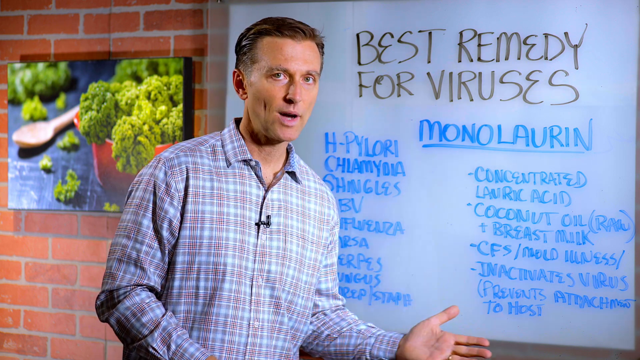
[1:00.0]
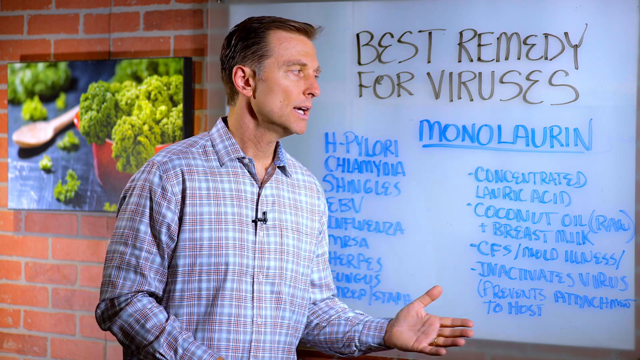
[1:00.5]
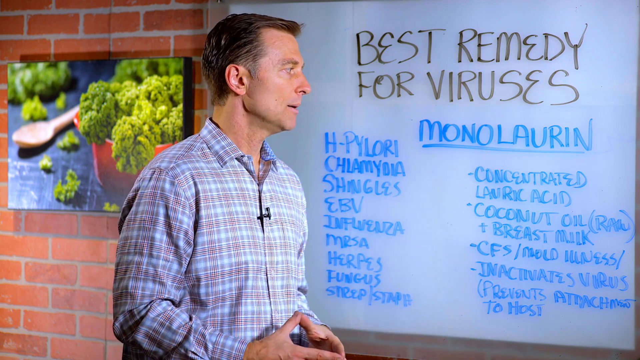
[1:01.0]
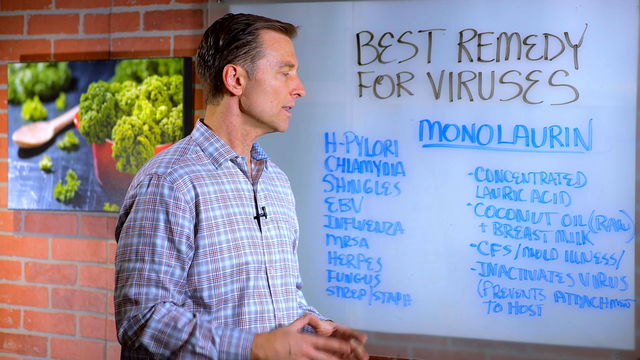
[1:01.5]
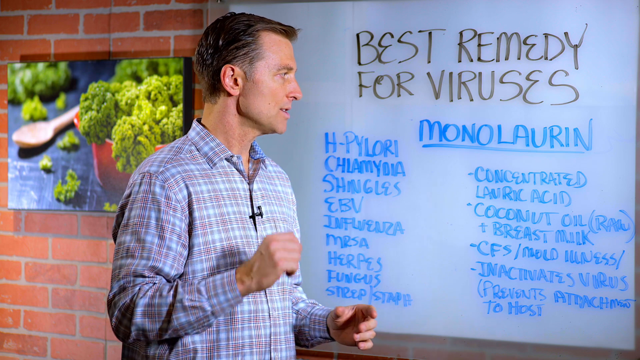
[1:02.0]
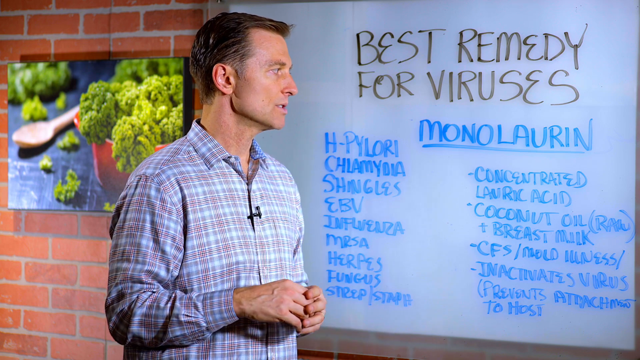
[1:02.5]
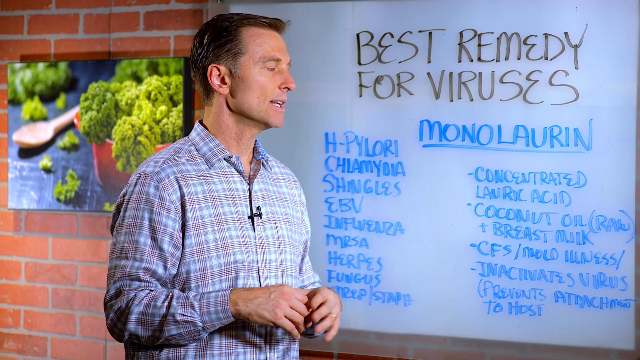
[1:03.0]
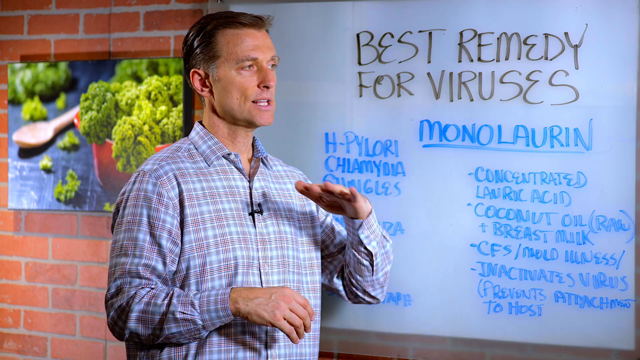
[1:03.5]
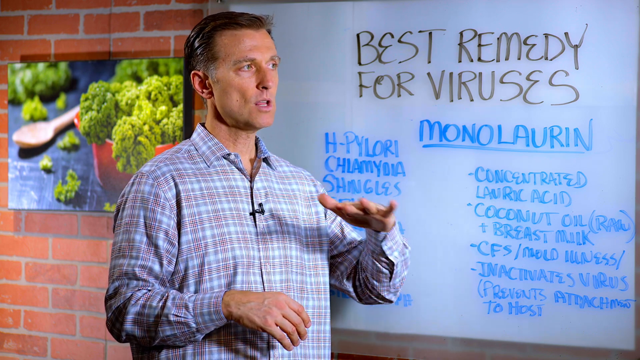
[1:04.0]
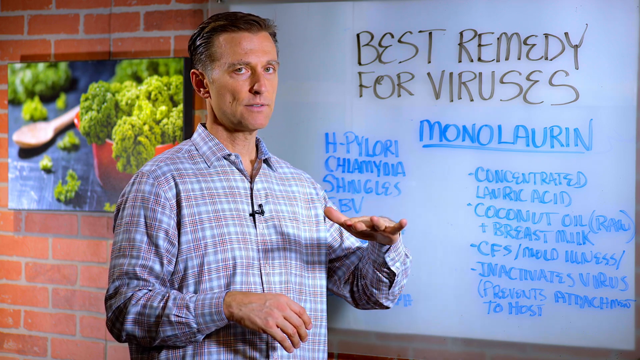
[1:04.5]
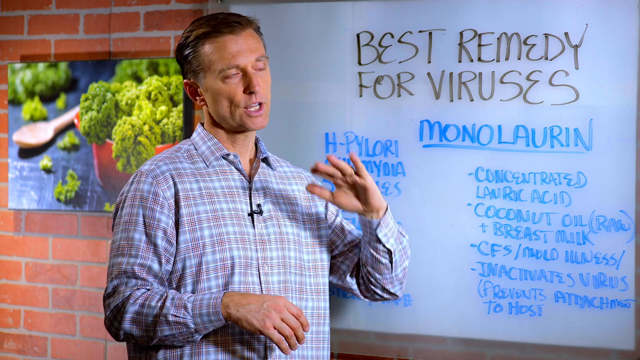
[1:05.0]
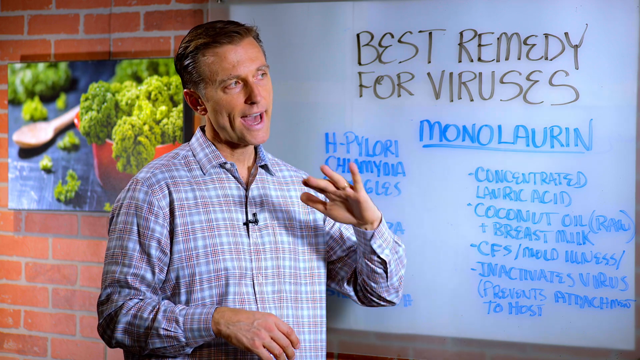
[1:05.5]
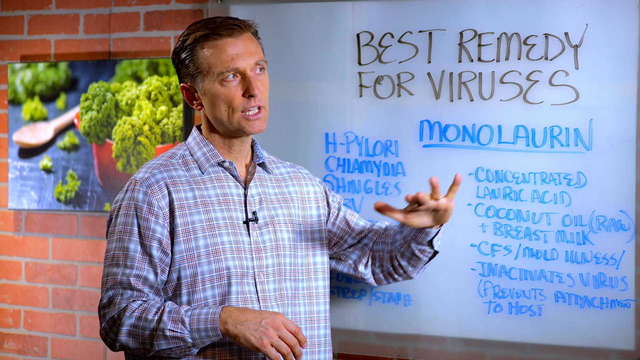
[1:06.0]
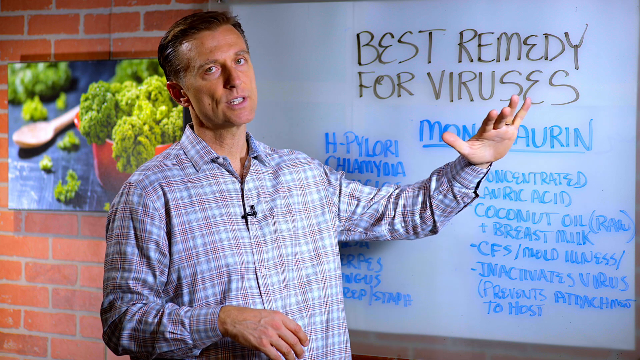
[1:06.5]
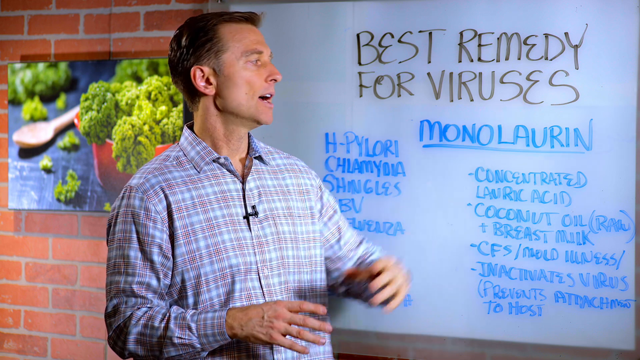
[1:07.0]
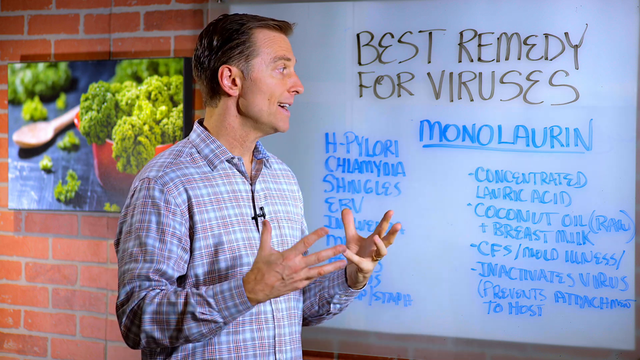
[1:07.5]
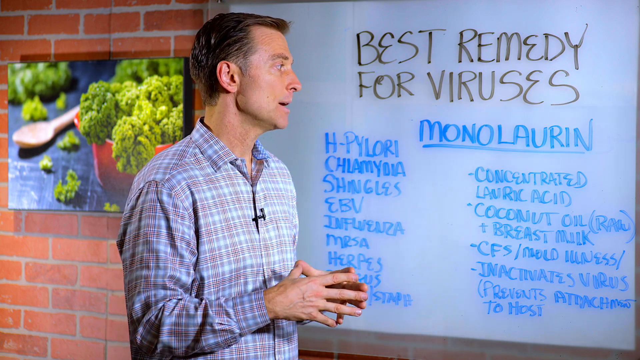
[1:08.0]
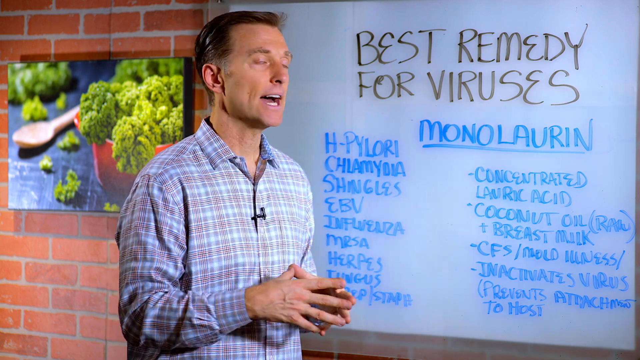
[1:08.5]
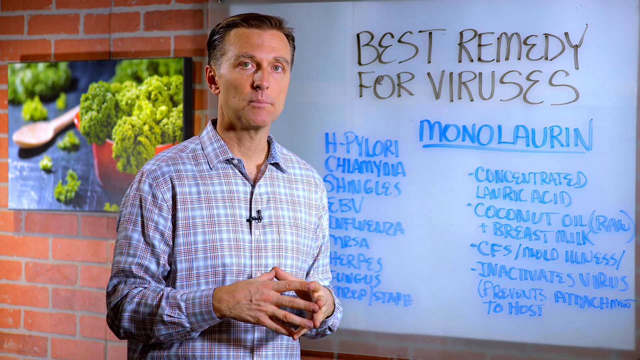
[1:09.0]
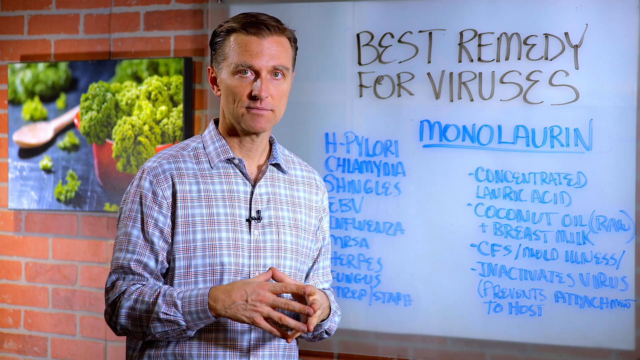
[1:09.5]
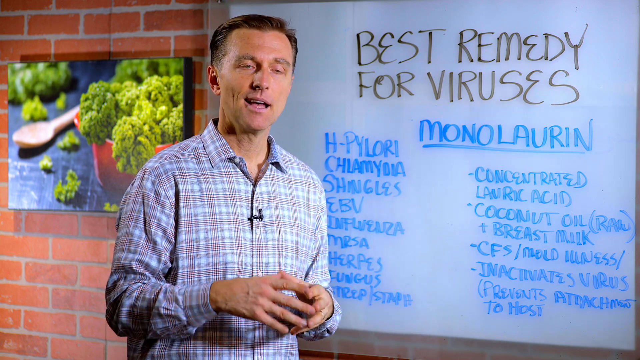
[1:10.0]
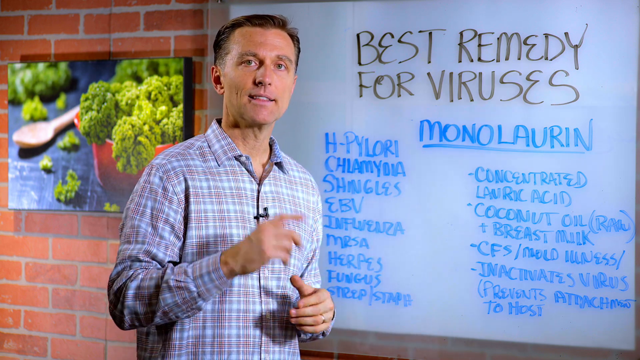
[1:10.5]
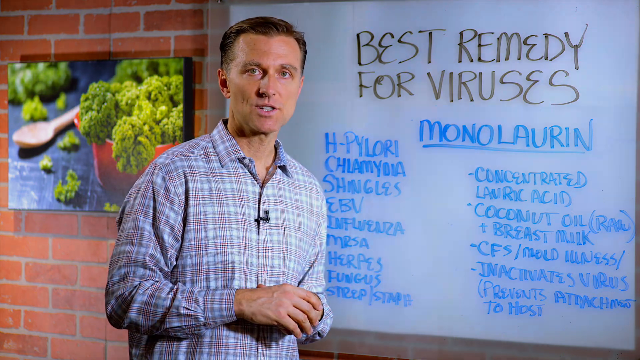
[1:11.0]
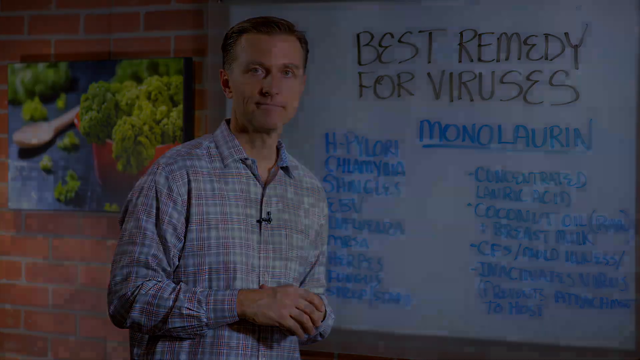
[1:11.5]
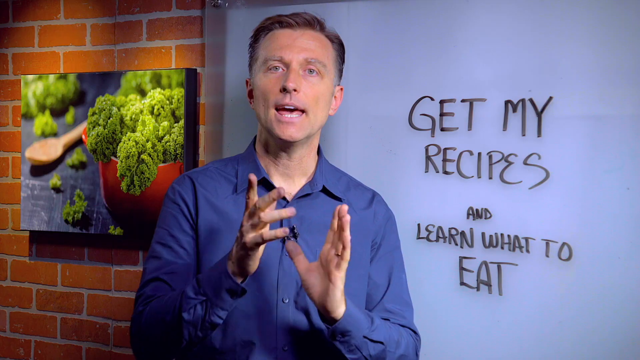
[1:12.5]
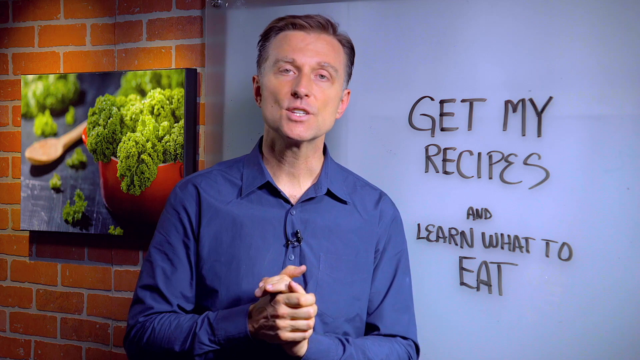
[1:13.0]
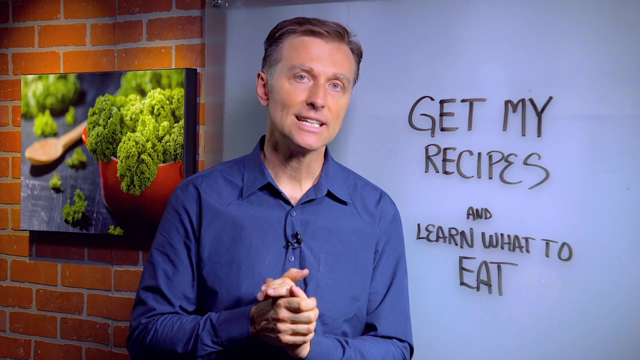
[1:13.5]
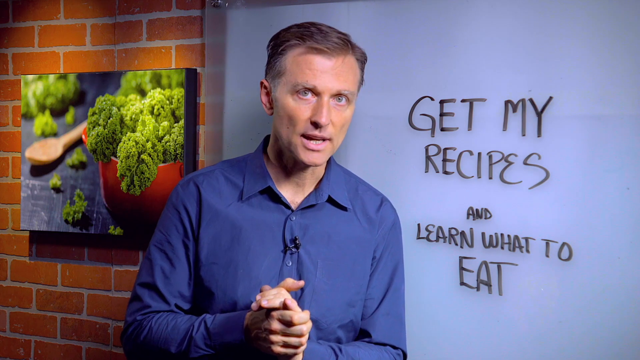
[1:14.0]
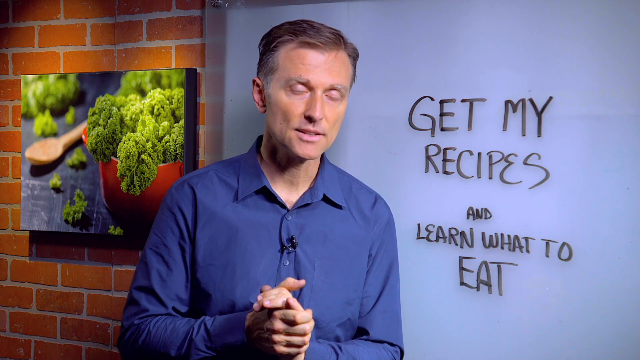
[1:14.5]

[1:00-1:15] A man stands in front of a screen talking about the best remedies for viruses, using his hands to emphasize words; at one point he puts his hand out flat and it goes up. In the first part he wears a blue and gray plaid shirt, but later he wears a grayish blue shirt, with the same microphone and in front of the same board; the shirt is the only thing that has changed. He stands in front of a brick wall, and in the background there is a red bowl filled with fresh broccoli and greens, with a wooden spoon laying on the table.